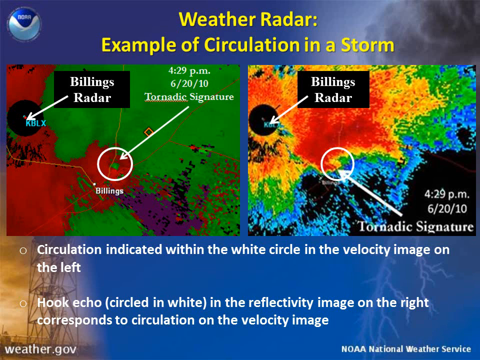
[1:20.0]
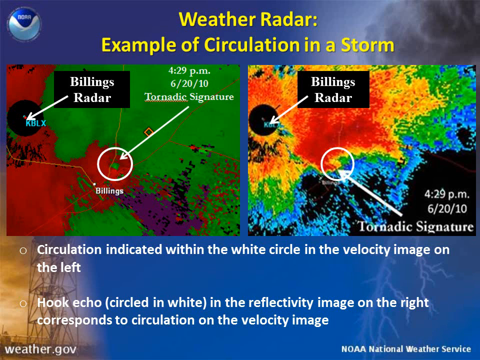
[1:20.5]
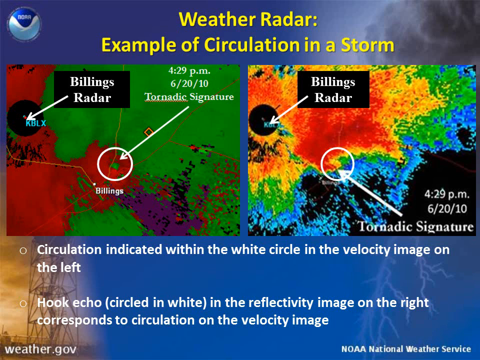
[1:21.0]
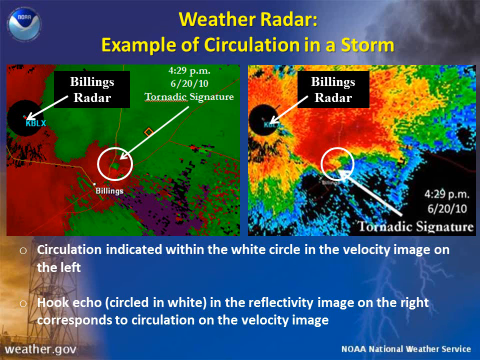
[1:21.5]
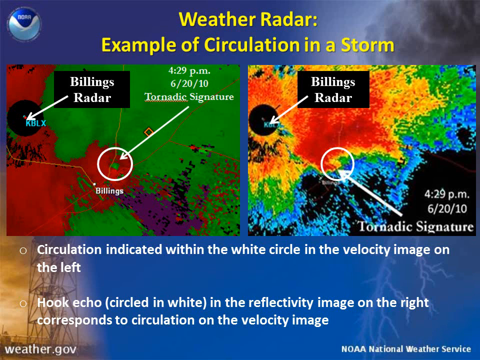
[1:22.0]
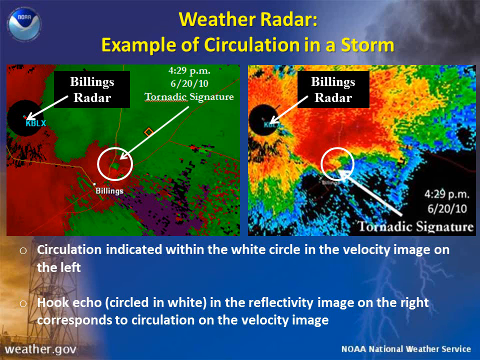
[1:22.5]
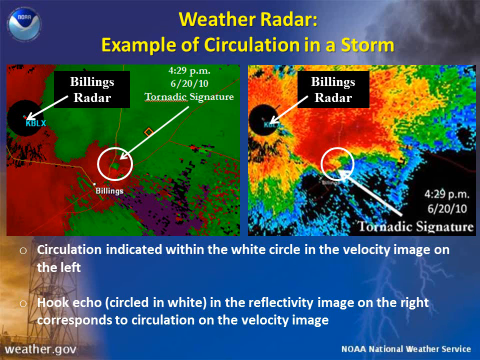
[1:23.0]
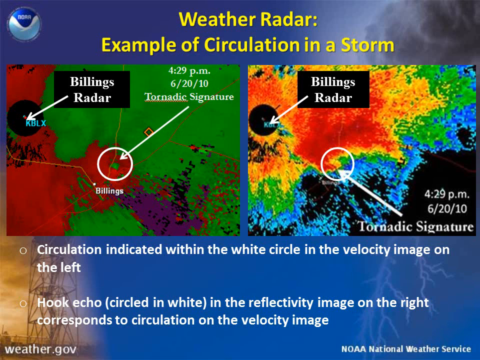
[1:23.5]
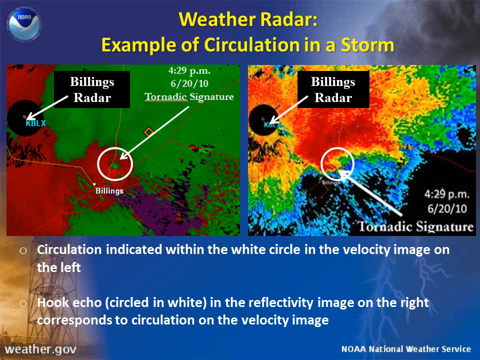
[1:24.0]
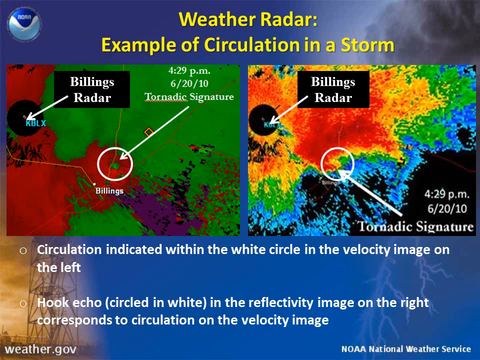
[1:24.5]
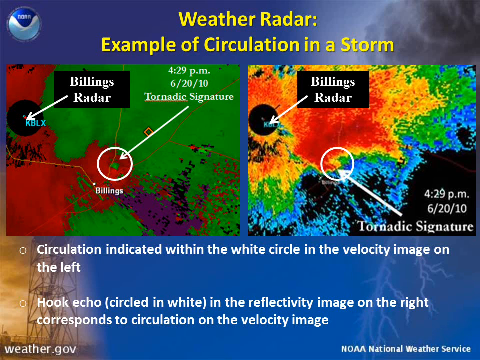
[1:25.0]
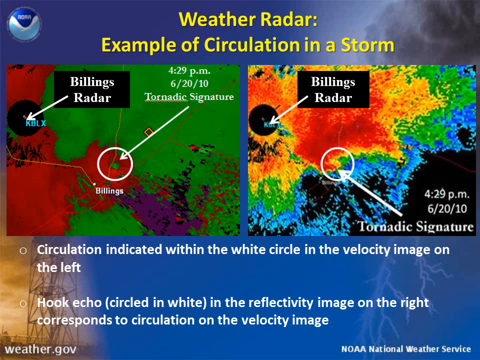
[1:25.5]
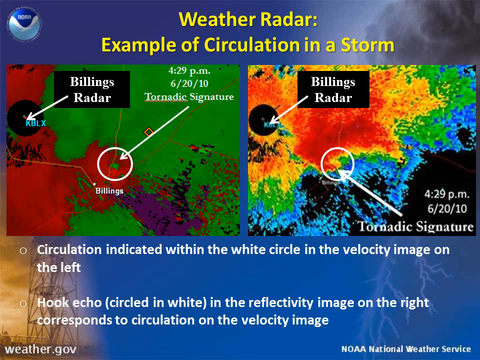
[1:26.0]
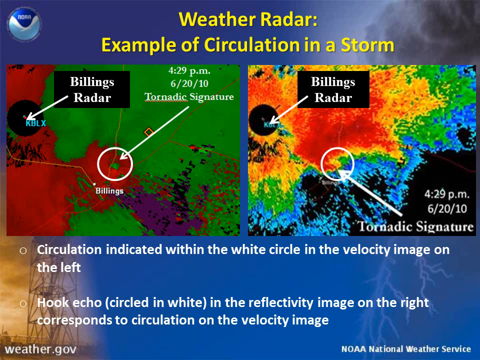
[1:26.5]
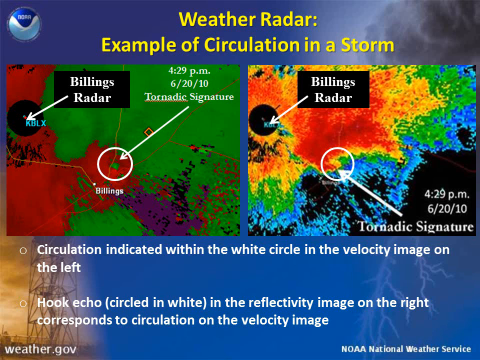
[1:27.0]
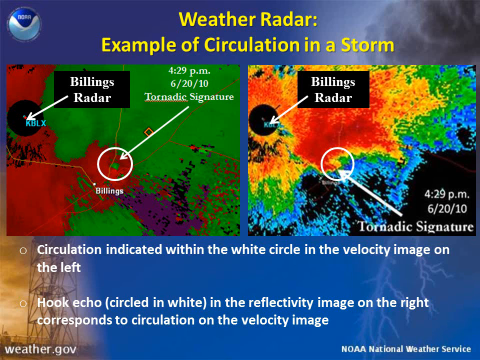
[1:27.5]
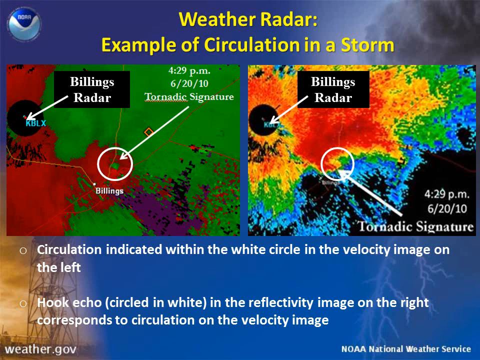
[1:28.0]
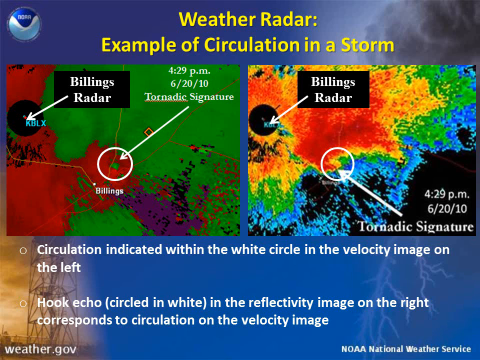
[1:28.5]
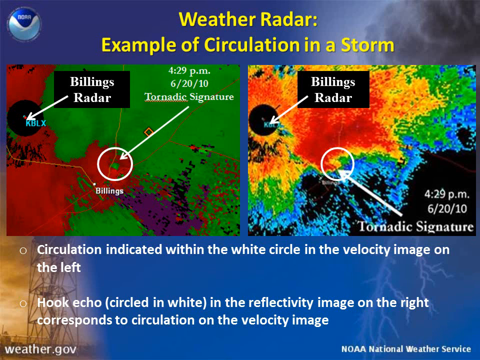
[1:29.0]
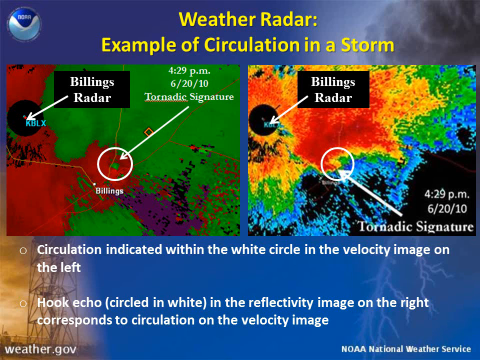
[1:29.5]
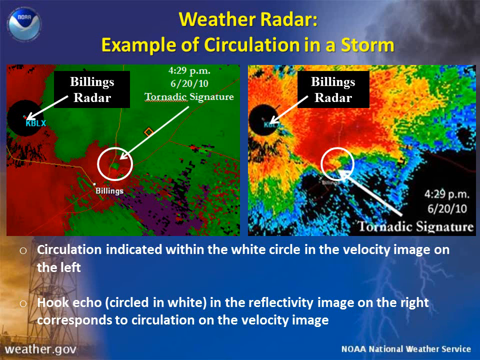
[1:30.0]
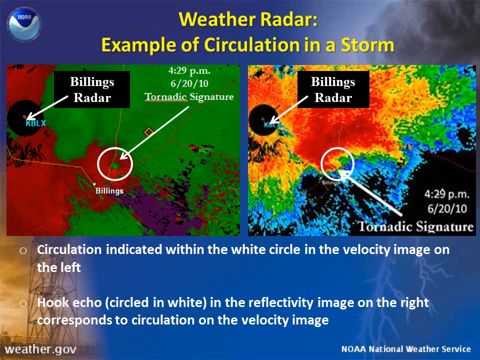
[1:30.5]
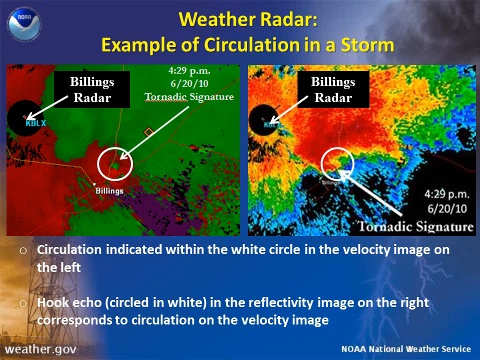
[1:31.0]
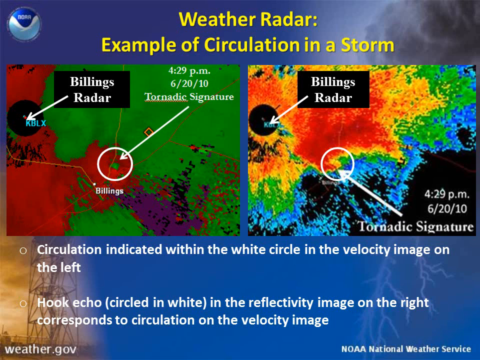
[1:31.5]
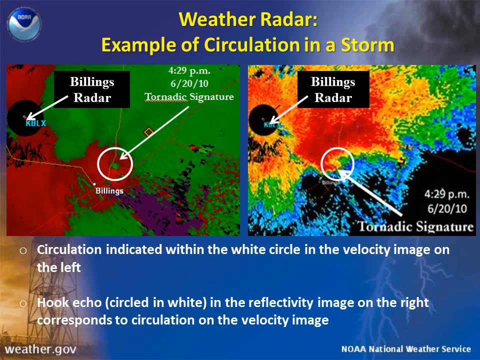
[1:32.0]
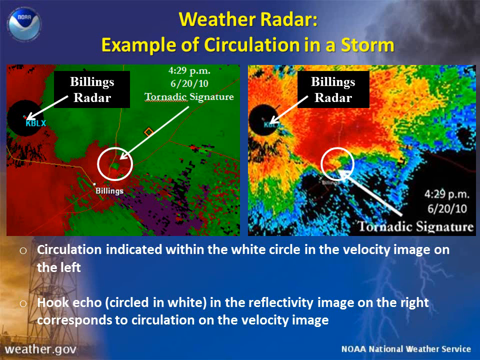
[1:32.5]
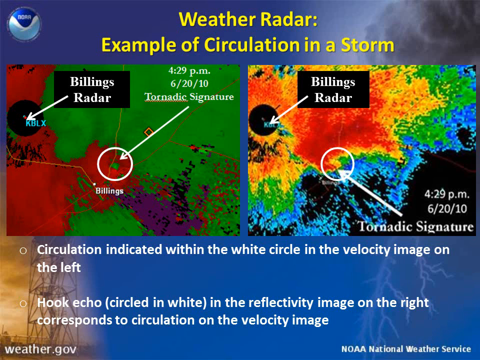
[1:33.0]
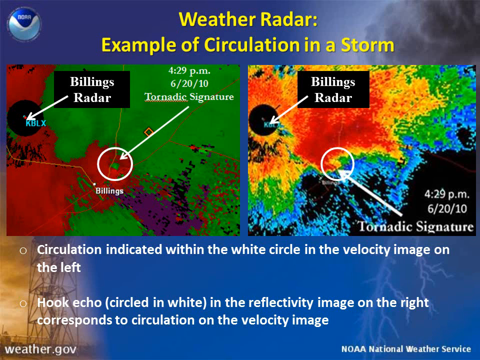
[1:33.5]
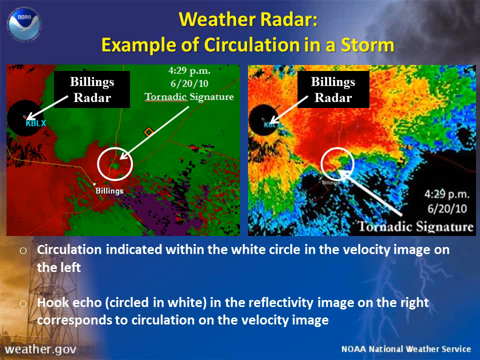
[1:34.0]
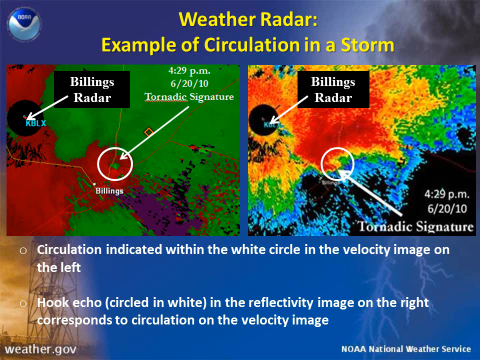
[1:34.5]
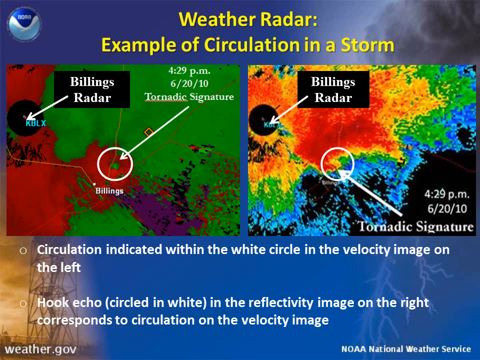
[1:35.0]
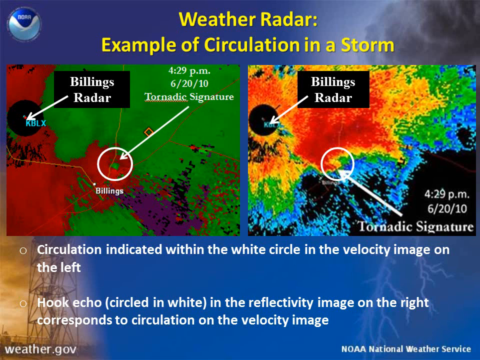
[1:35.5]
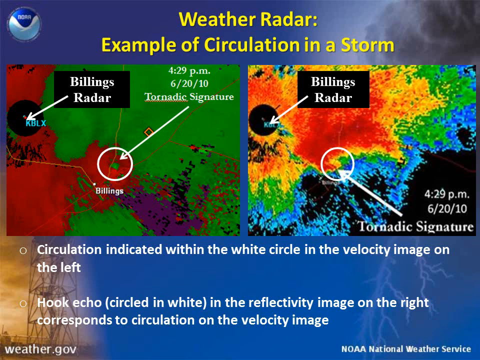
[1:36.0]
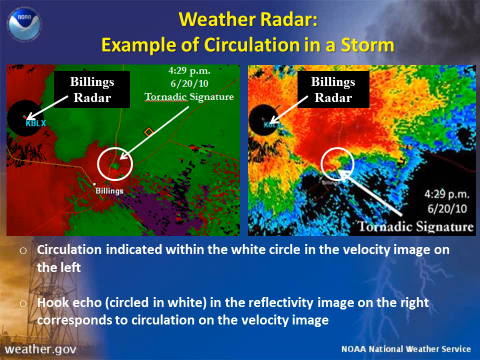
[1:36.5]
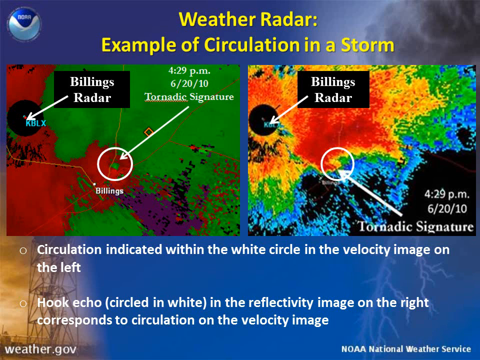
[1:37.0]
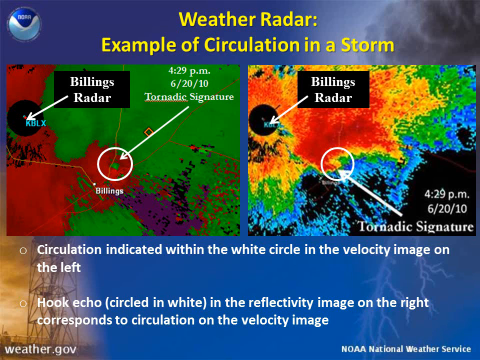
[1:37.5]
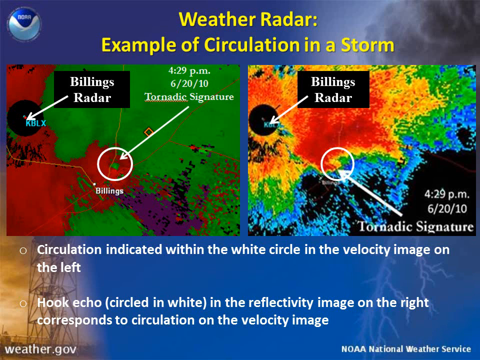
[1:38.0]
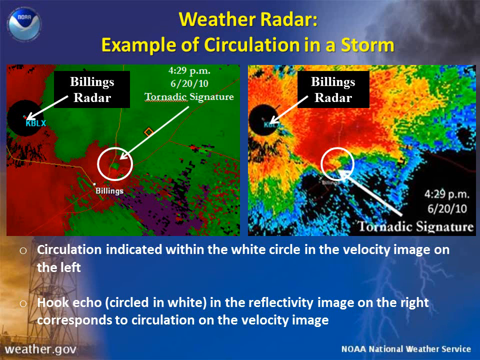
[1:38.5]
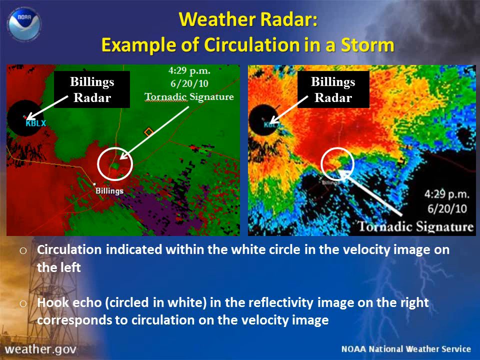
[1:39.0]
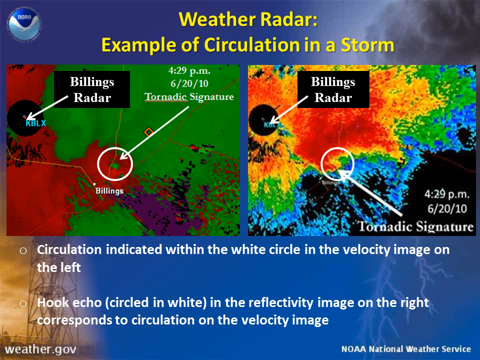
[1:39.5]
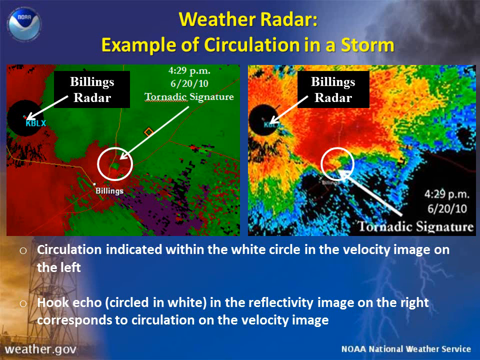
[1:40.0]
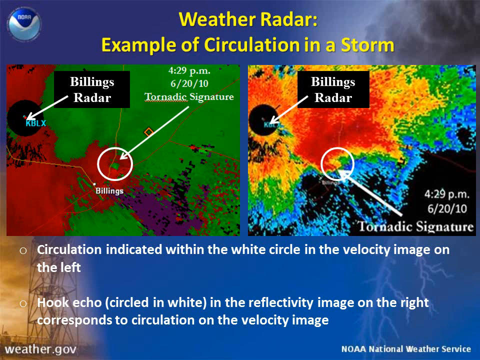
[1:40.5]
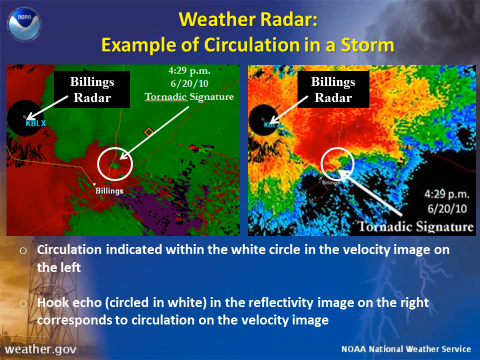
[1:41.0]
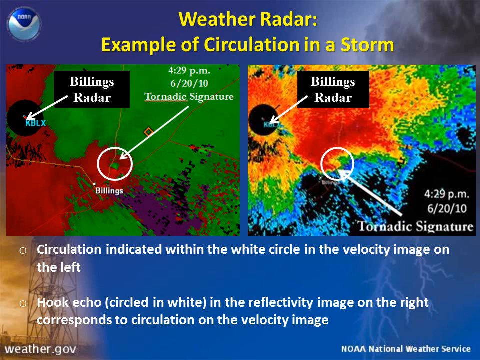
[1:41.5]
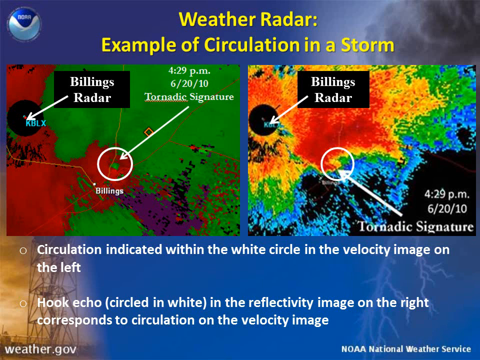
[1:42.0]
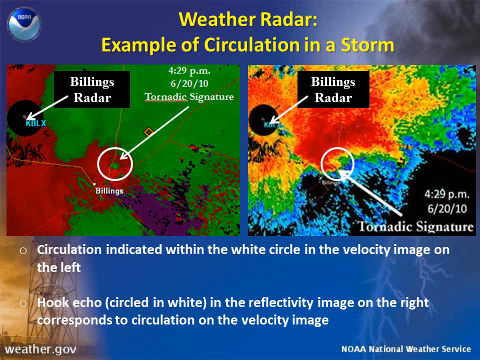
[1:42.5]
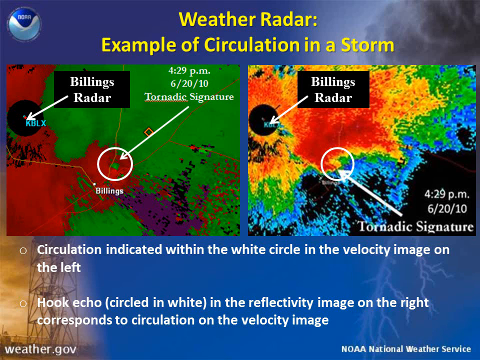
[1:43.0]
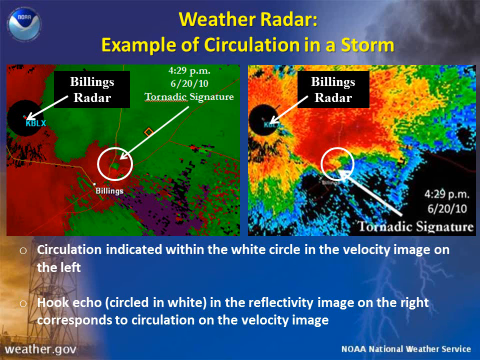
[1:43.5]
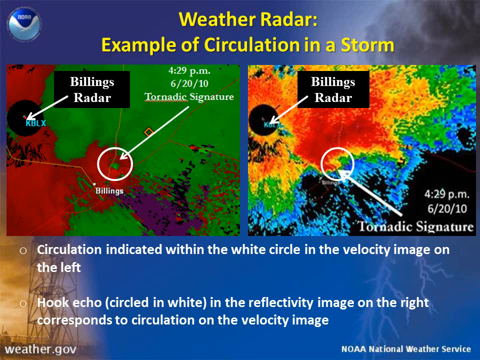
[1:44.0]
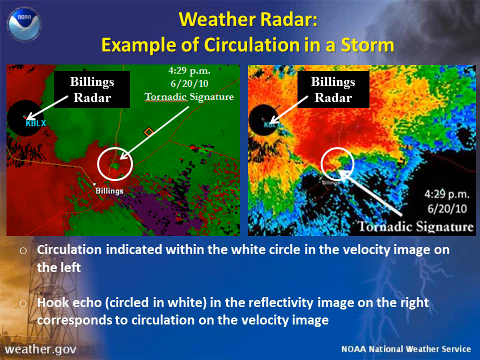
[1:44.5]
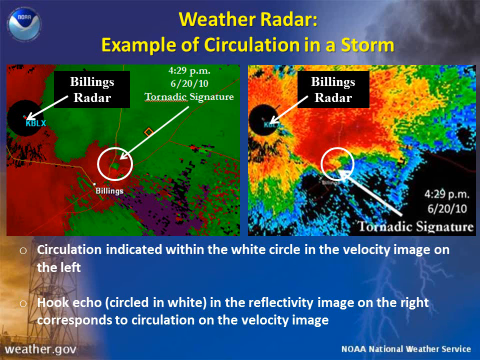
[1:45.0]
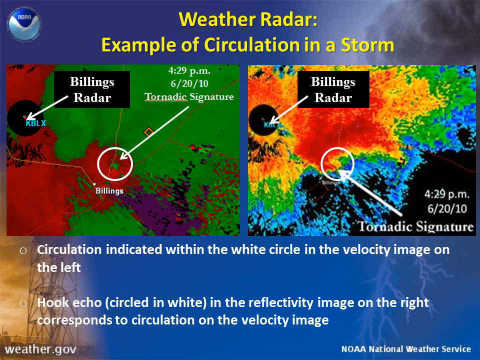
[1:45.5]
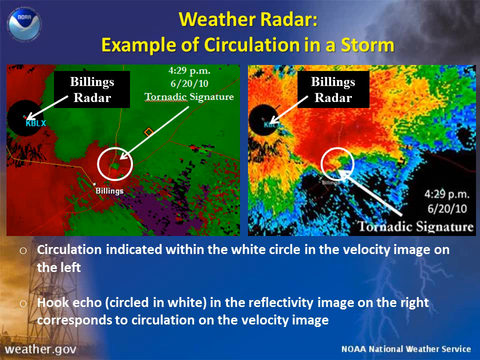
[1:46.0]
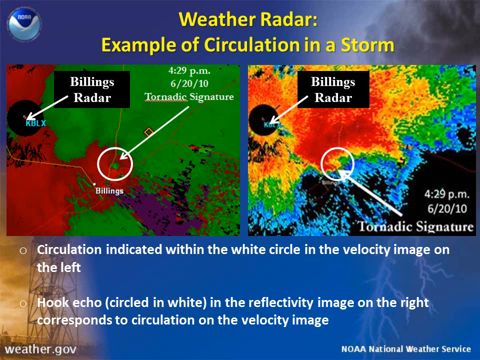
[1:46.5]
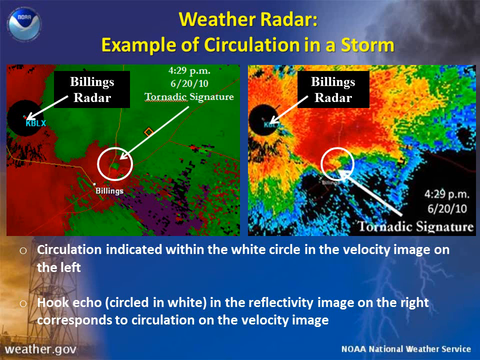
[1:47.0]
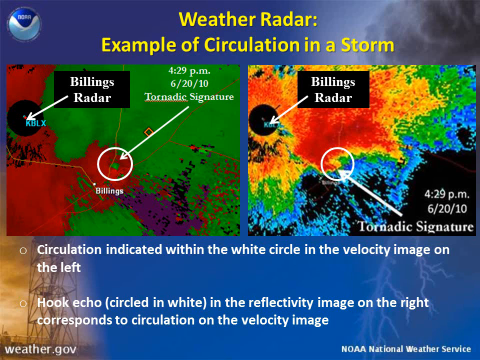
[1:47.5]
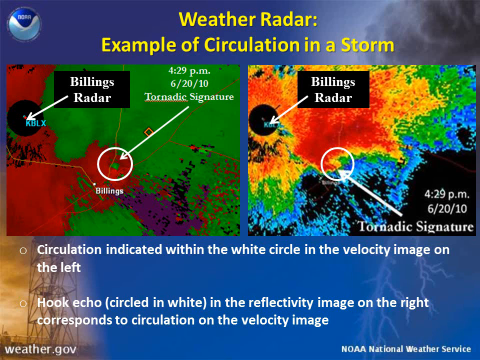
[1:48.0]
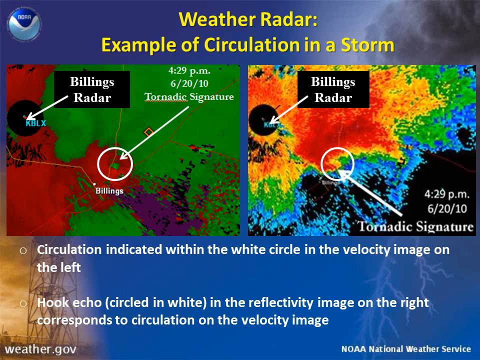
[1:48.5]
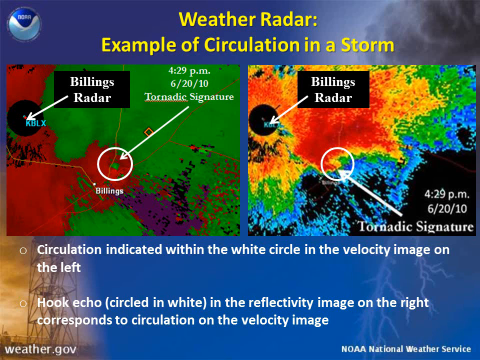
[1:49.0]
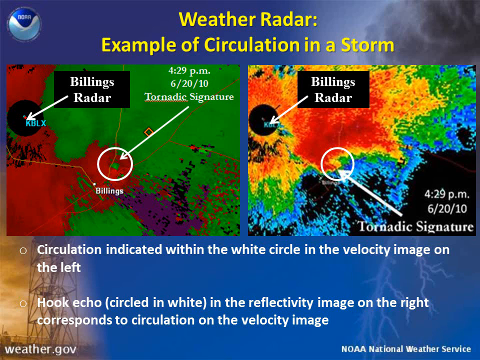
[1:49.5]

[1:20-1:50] The slide's background has dark clouds in the top right corner and white lightning bolts coming downward in the bottom right corner, a kind of dark blue gradient running diagonally through the middle, a kind of sunset orangeish hue, and some lines that look like they come from a tower. The title, in bolded yellow text, is "weather radar: example of circulation in a storm." In the top left corner is a small circular logo in blue and white with some lightish blue on the bottom. Two square weather radar images are shown. The left one shows the Billings radar pointing to a certain point, with a patch of red on the left side, a bigger patch of green taking up about two-thirds on the right side, and a small patch of purple on top of the green. The right image also says "Billings radar," pointing to a point on the top left of the map; it has a reddish patch that fades in a gradient to an orange border, a green area bordering that, a blue area bordering the green, and black in the bottom right corner. Another arrow points to a hollow circle with a white outline at a point on the radar, and beneath the images is some text with bullet points.